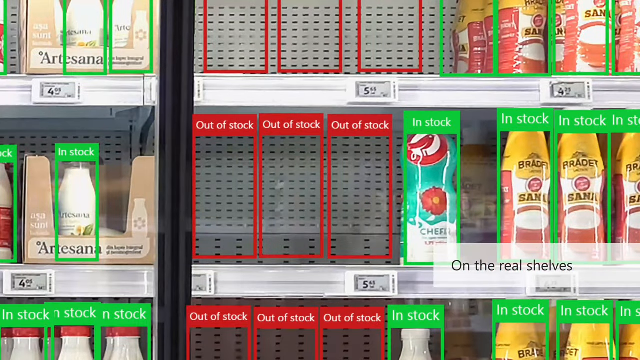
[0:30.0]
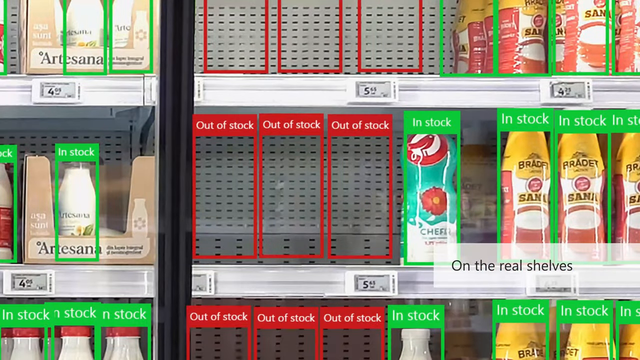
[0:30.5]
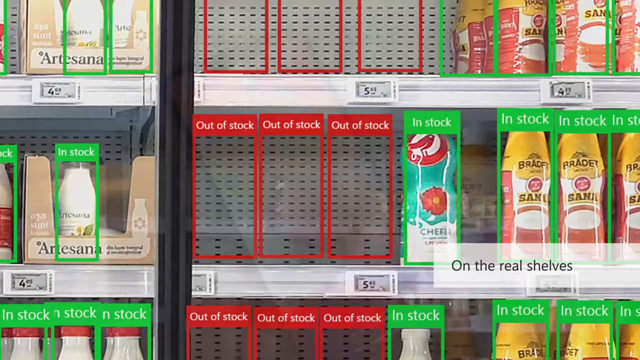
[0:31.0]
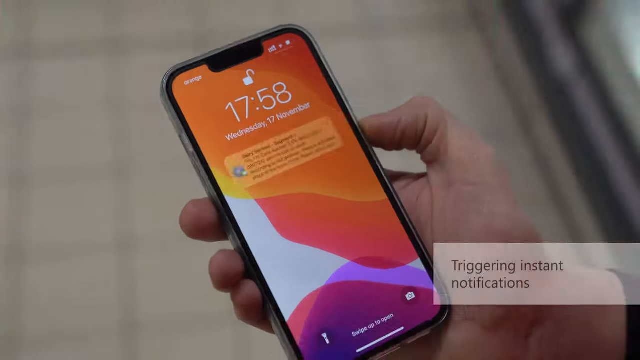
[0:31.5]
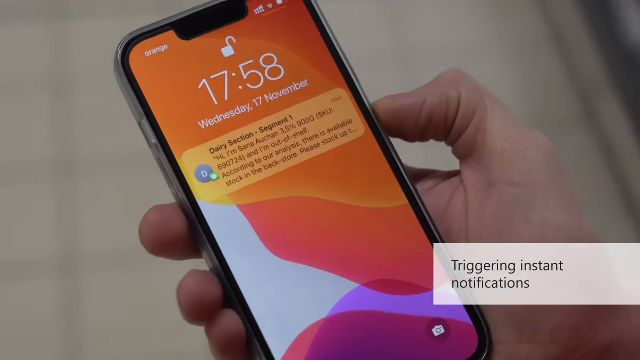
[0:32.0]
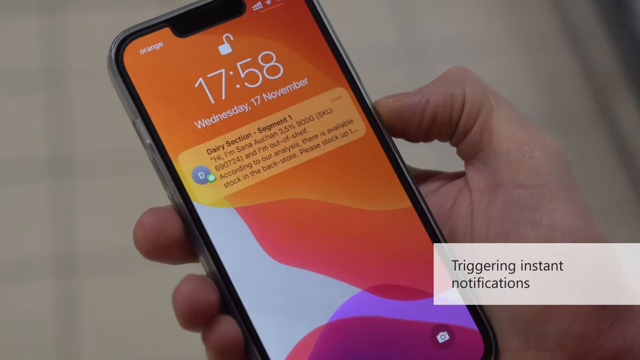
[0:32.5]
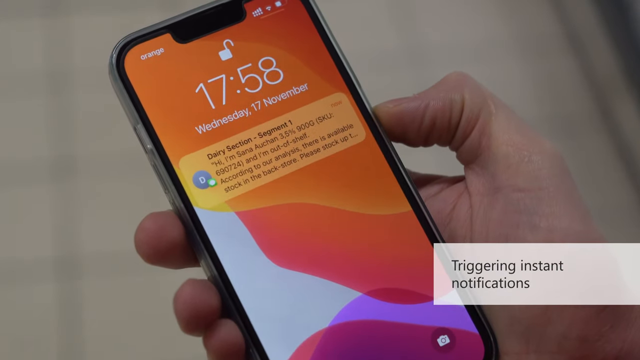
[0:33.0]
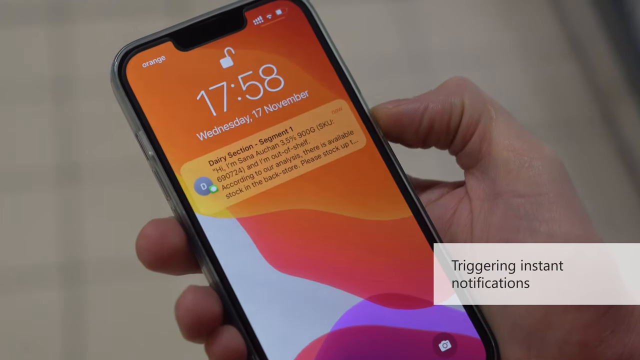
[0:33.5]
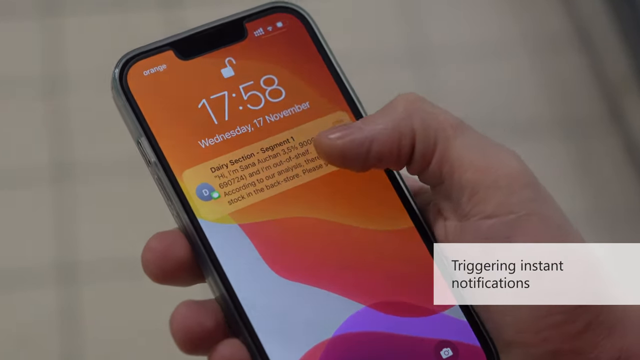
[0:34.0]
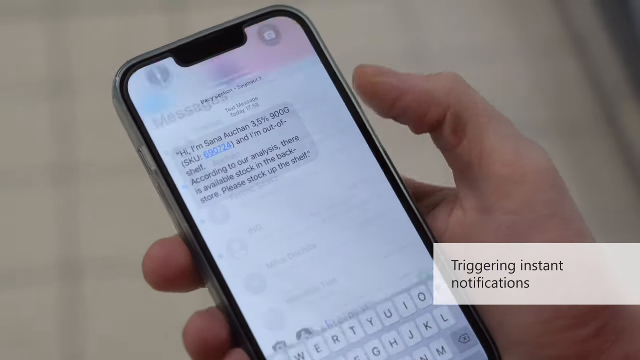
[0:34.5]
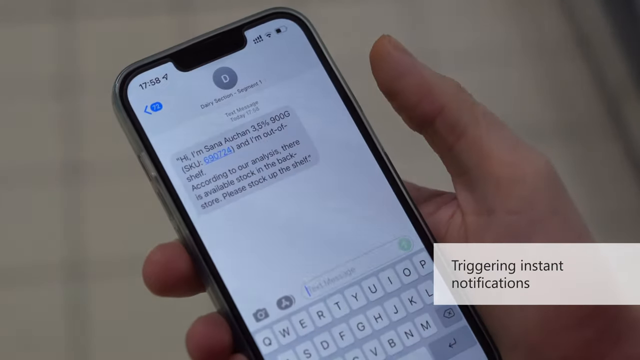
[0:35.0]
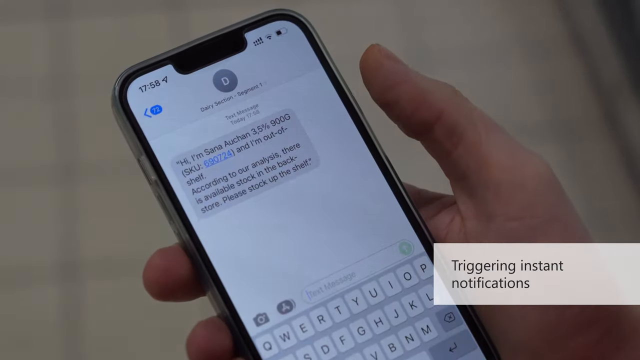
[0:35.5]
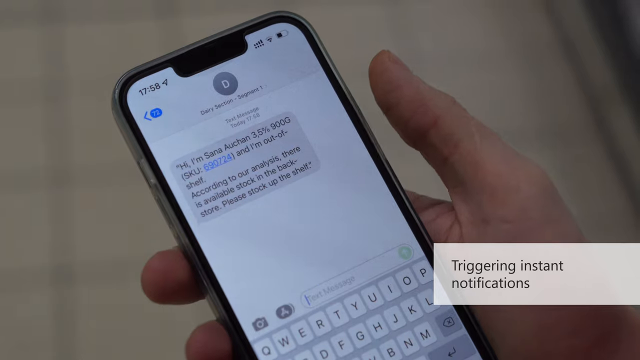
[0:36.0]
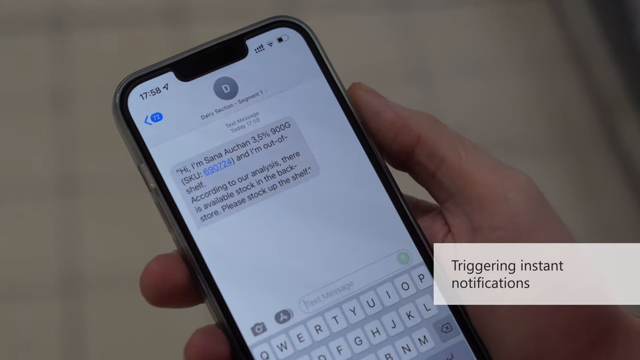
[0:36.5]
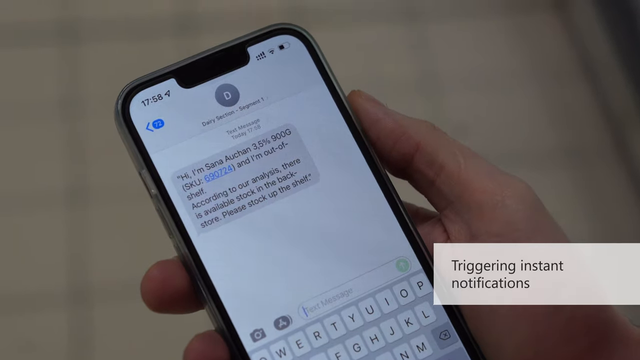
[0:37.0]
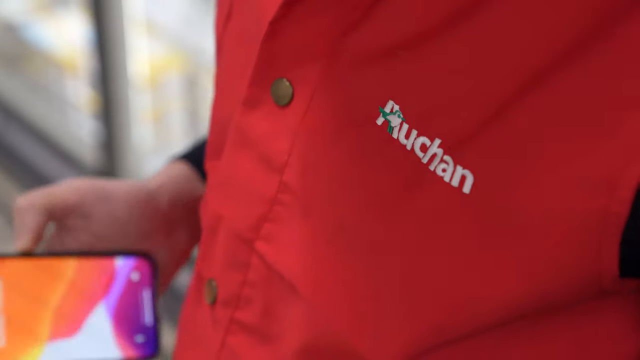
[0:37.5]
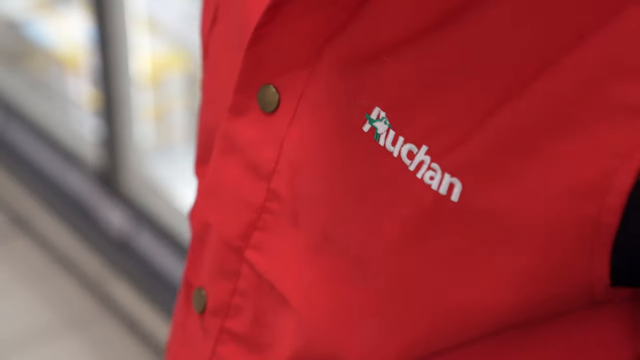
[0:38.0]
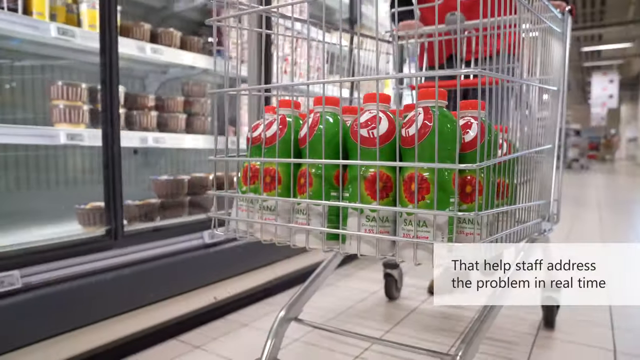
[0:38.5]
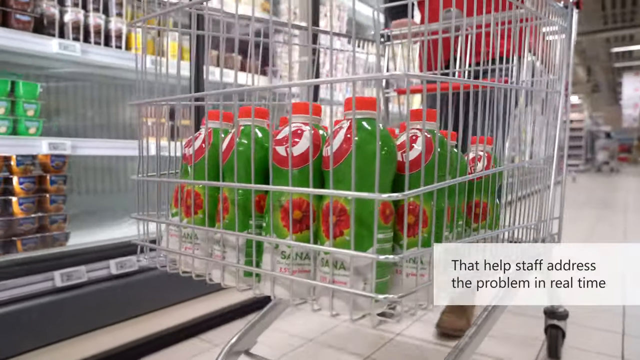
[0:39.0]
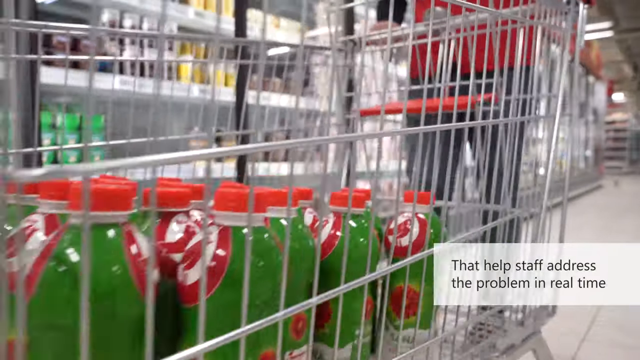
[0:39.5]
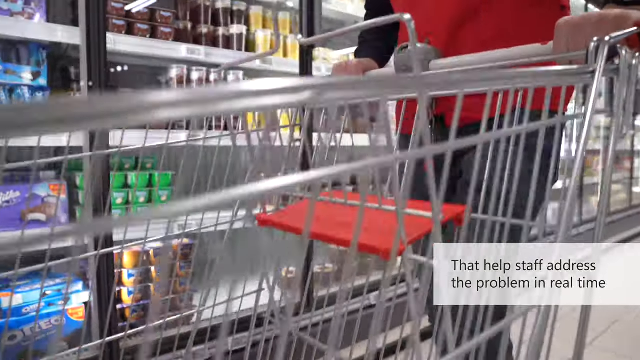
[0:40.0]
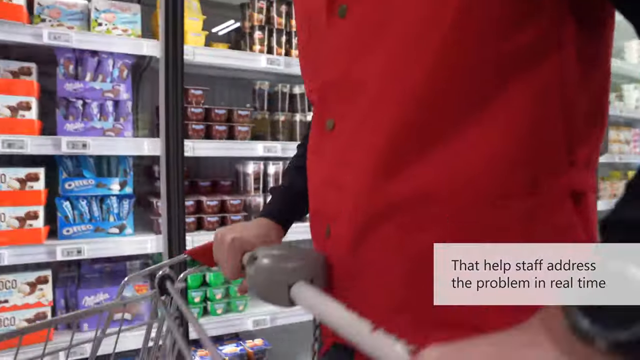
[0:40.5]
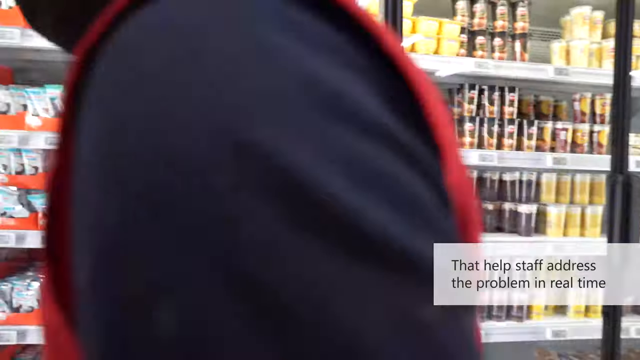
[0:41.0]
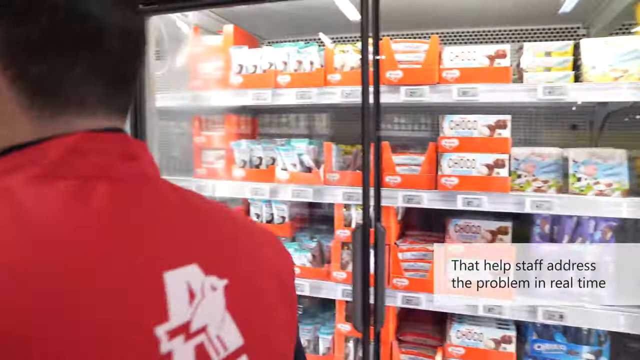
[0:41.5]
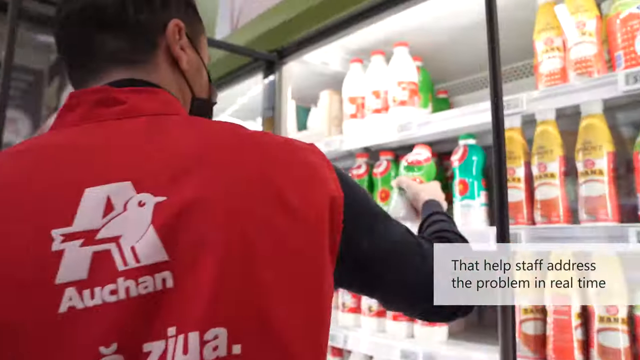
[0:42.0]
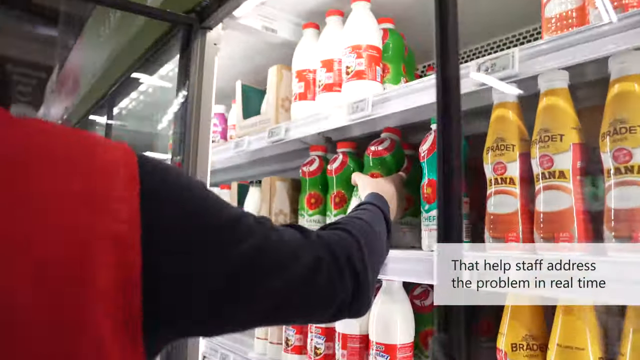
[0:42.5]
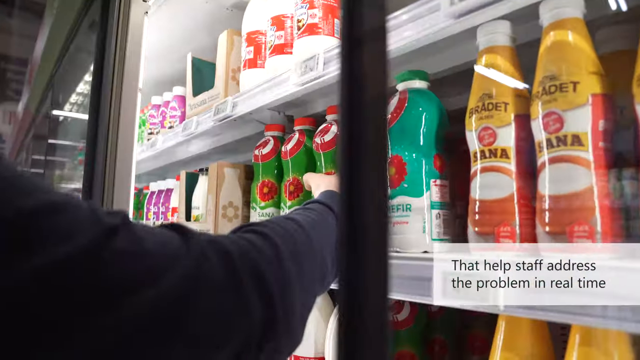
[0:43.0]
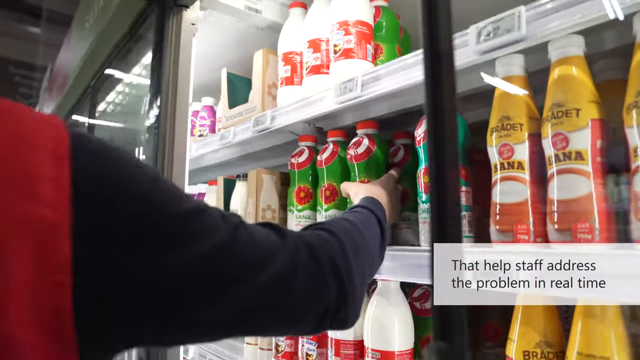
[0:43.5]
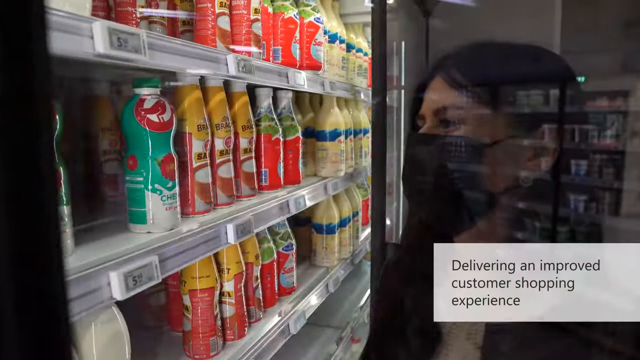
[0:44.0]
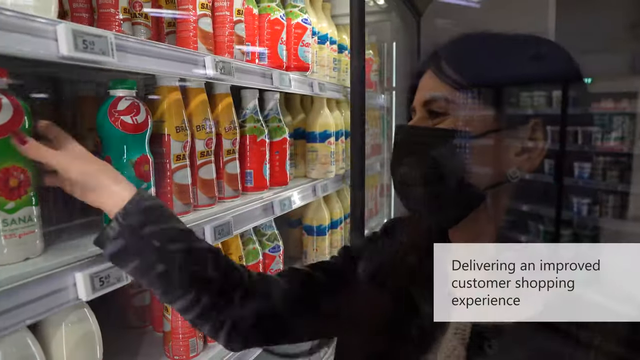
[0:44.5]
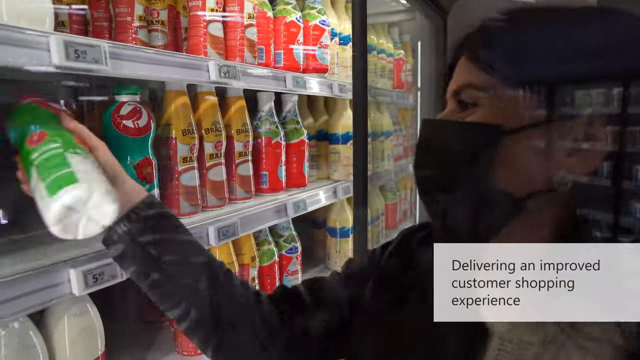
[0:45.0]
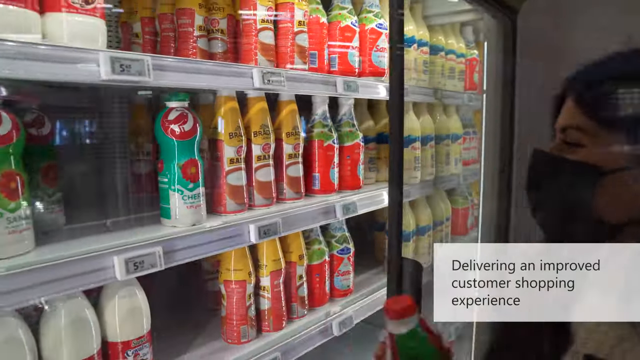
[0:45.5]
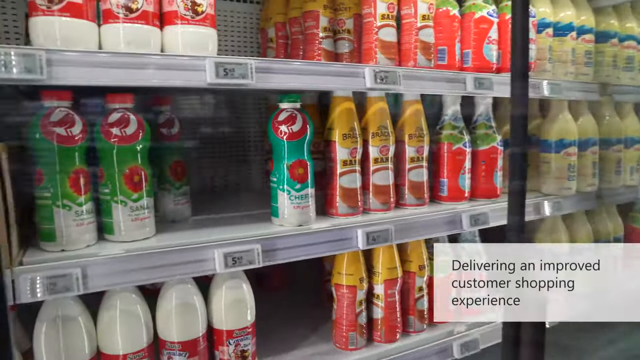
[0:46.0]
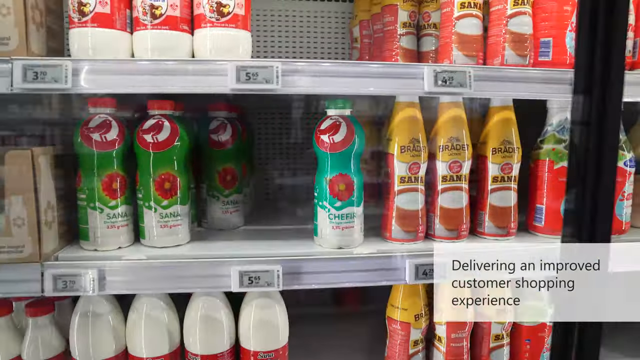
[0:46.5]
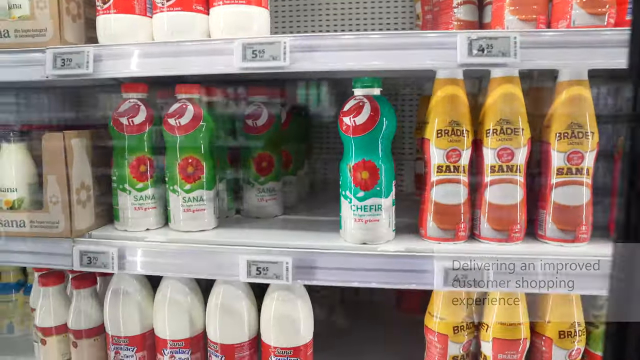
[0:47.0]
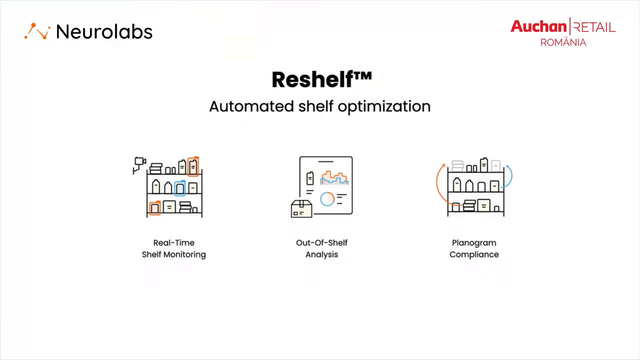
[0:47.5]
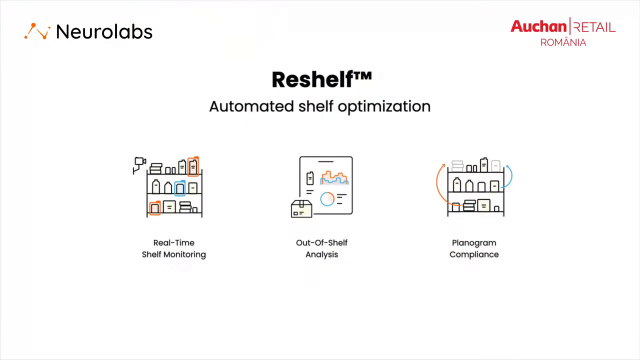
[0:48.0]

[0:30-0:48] A hand holds a smartphone-like device with a message on the lock screen. The message alerts the worker about a specific product that is out of stock, mentioning its name and SKU number. An instant notification lets the worker know what is missing and what stock is available in the back. The phone screen looks like it shows the full message with a request to restock the shelves. Right after, an employee in a red uniform walks toward the fridge and refills the missing product. The final scene shows a shopping cart filled with the same green bottles seen earlier, ready to be placed on the shelf.